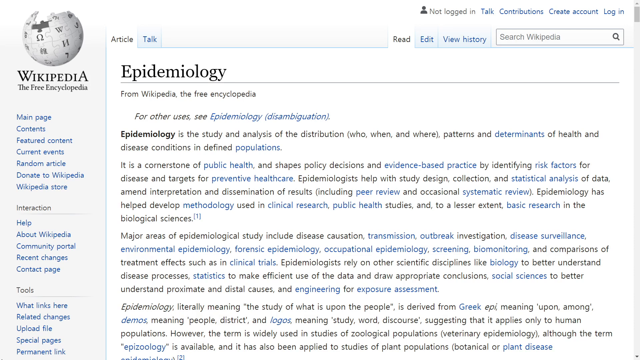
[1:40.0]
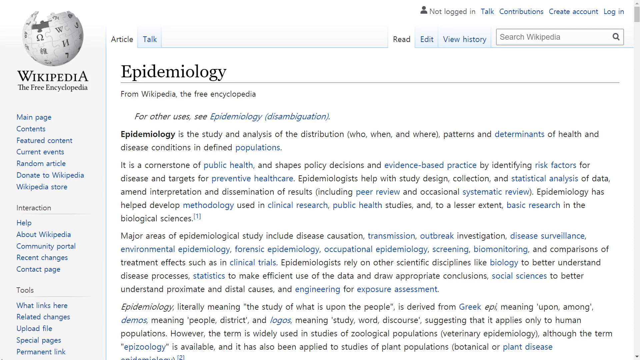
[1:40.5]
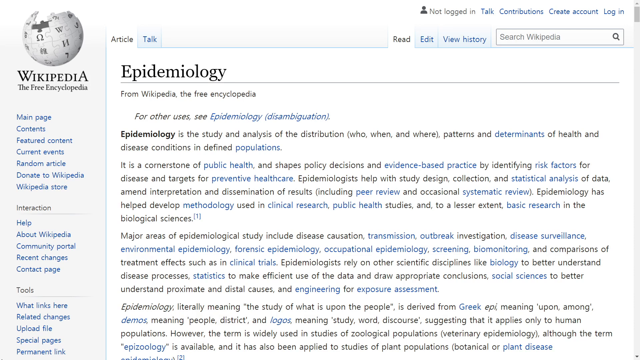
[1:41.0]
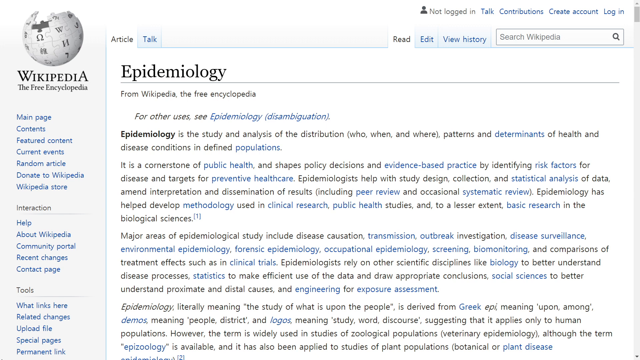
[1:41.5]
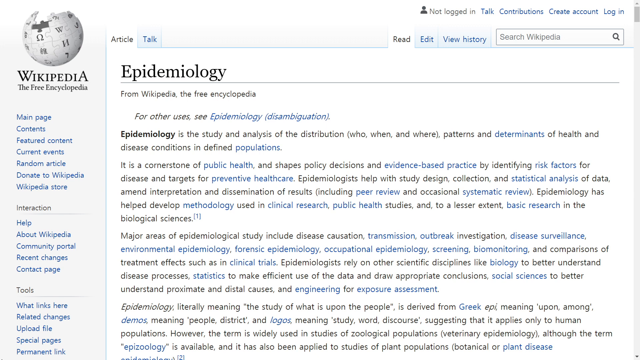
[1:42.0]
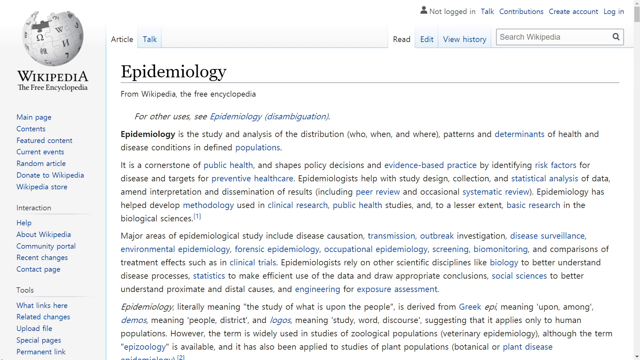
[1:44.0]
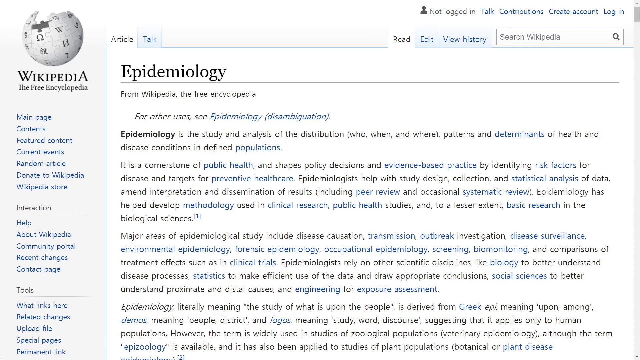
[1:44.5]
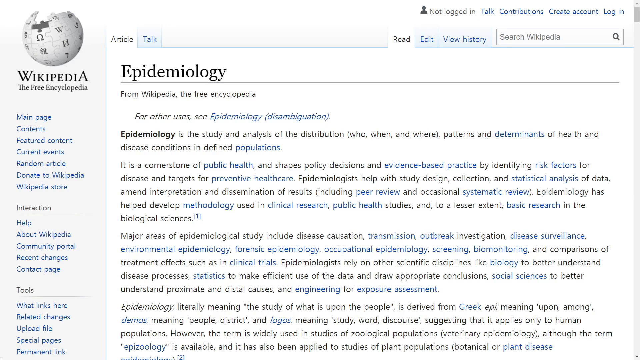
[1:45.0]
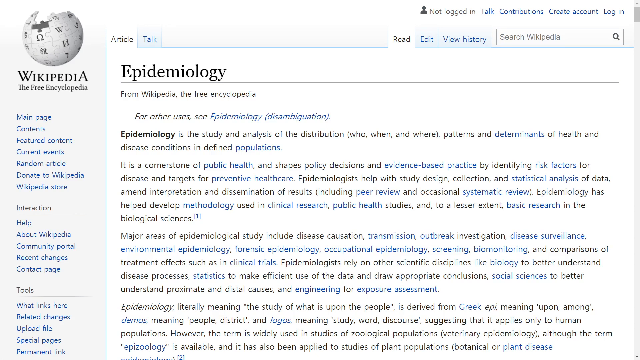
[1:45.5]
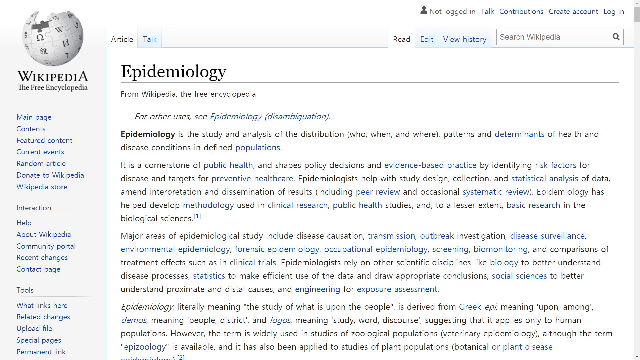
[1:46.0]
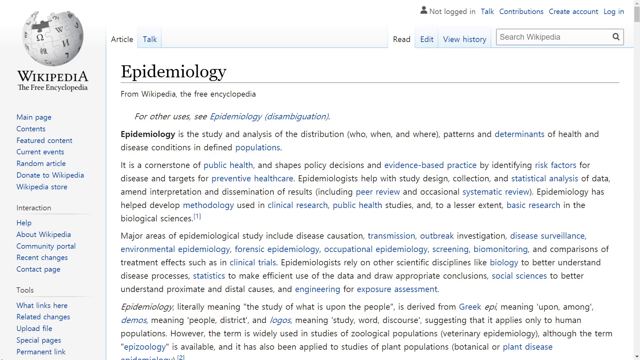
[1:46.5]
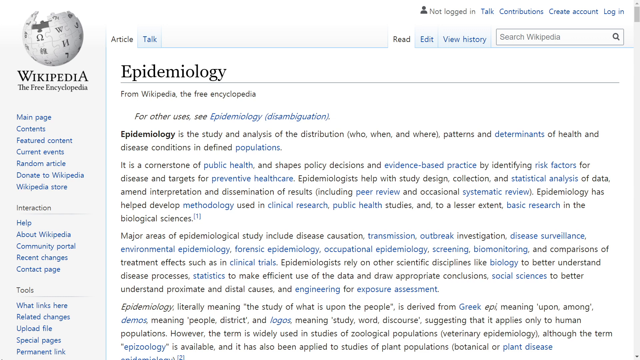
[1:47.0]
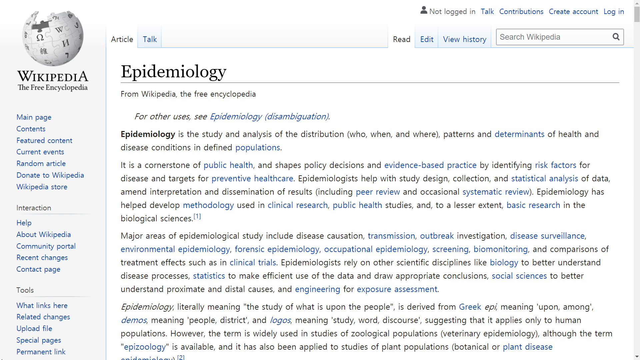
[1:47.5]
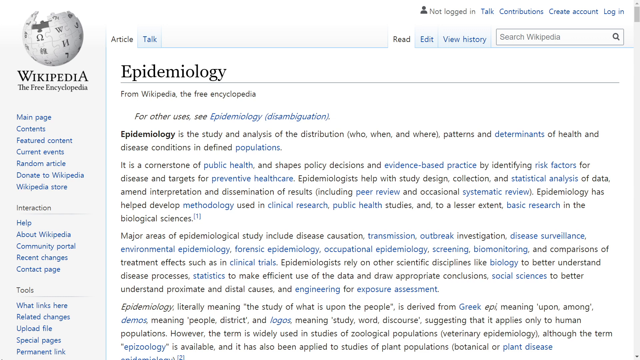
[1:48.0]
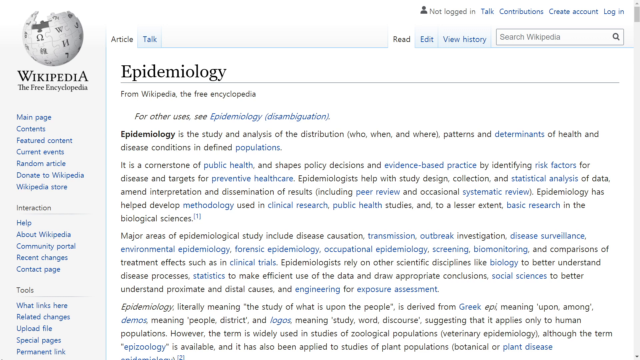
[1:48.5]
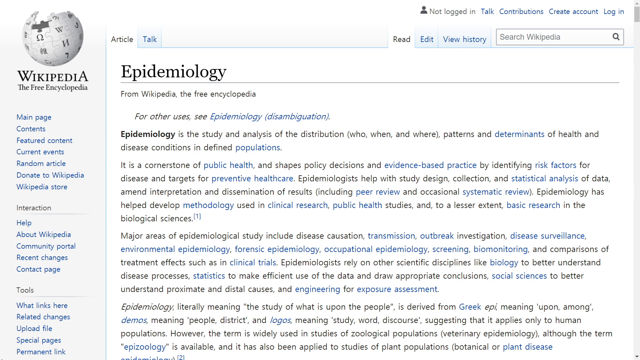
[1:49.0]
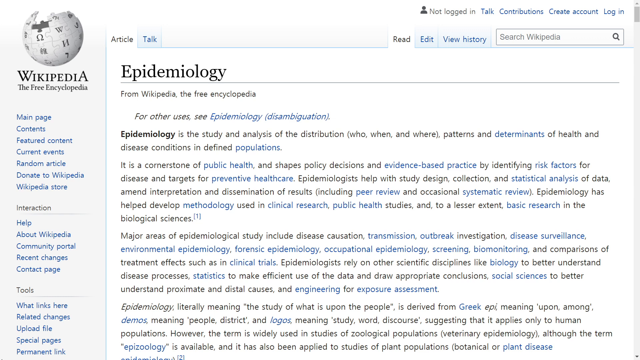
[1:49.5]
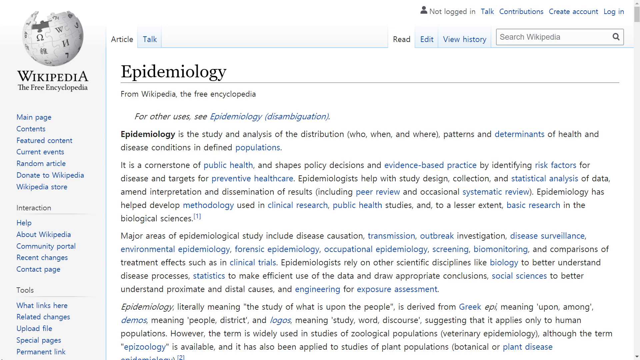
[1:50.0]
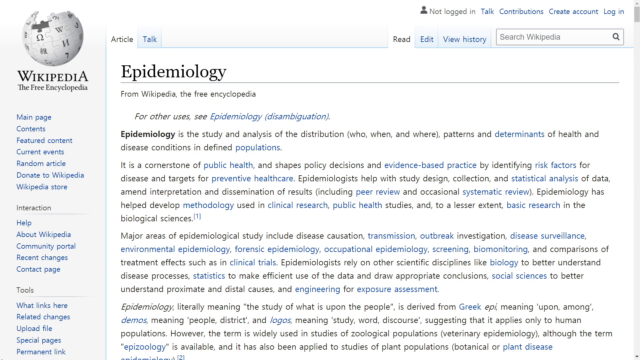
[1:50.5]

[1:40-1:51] A Wikipedia page, headed "Wikipedia, the free encyclopedia", shows an article on epidemiology. The text defines epidemiology as the study and analysis of the distribution, patterns and determinants of health and disease conditions in populations, calls it "a cornerstone of public health" that shapes policy decisions and evidence-based practice by identifying risk factors for disease and targets for preventive healthcare, and lists major areas of epidemiological study including disease causation, transmission, outbreak investigation, disease surveillance, environmental epidemiology, forensic epidemiology, occupational epidemiology, screening, biomonitoring and comparisons of treatment effects, as well as the use of statistics, social sciences and engineering for exposure assessment.